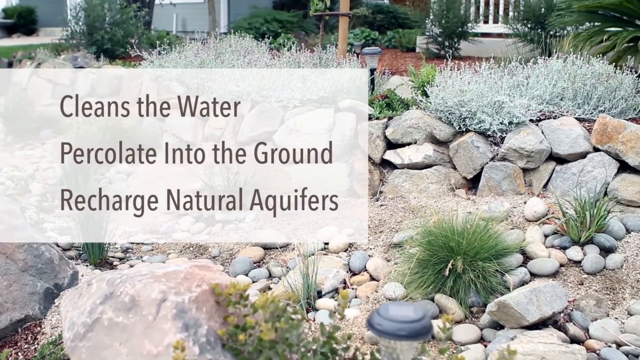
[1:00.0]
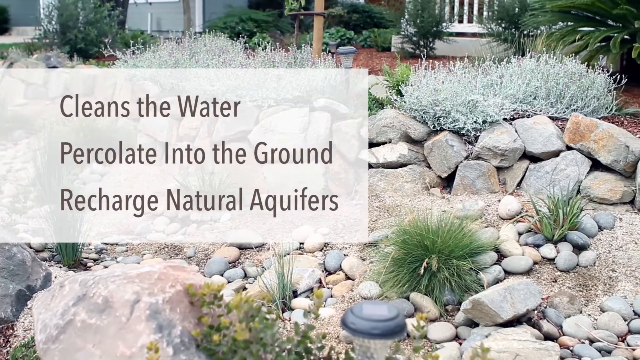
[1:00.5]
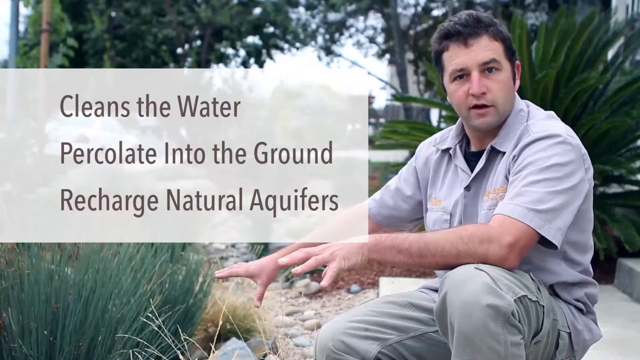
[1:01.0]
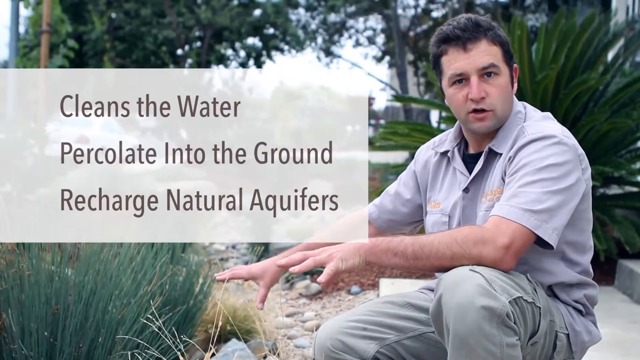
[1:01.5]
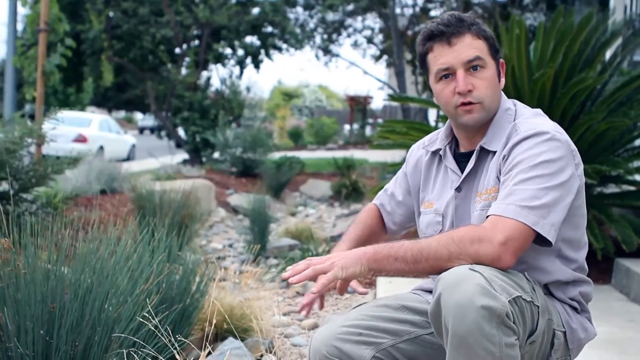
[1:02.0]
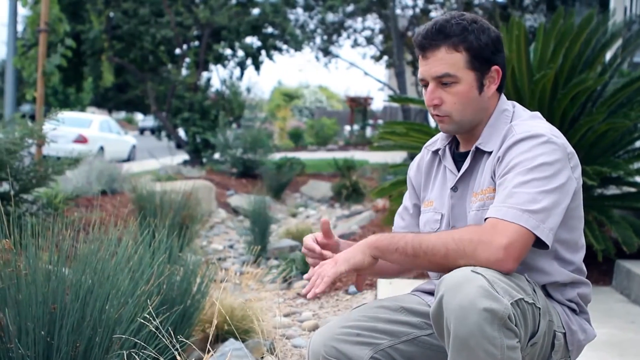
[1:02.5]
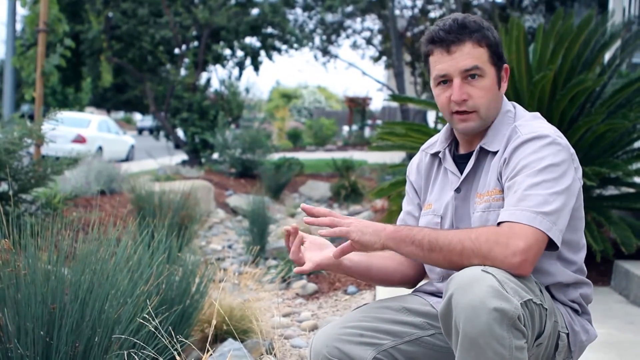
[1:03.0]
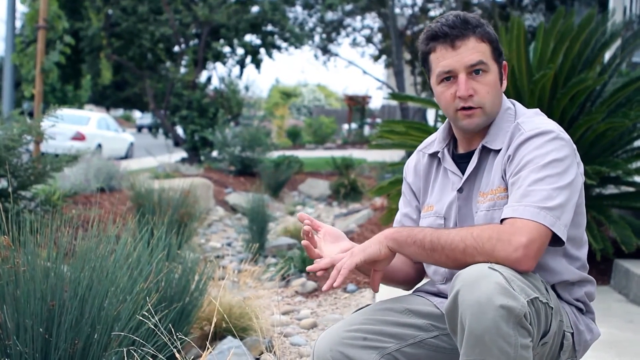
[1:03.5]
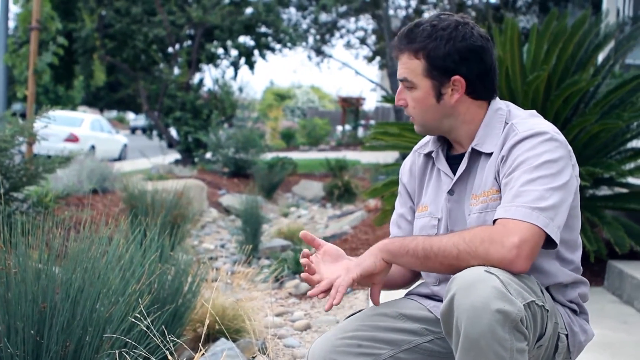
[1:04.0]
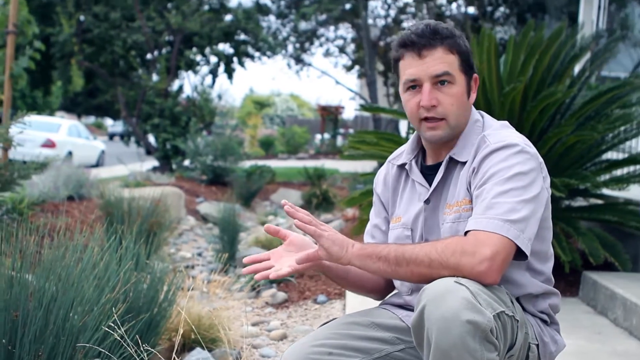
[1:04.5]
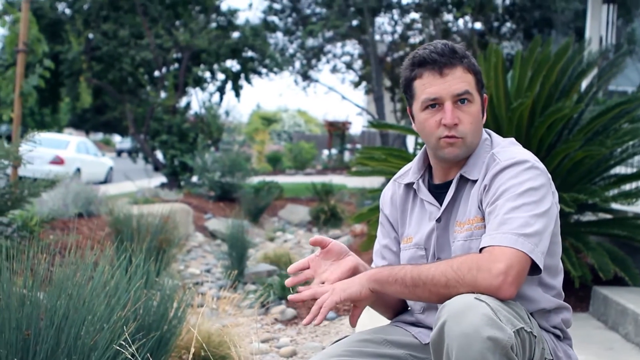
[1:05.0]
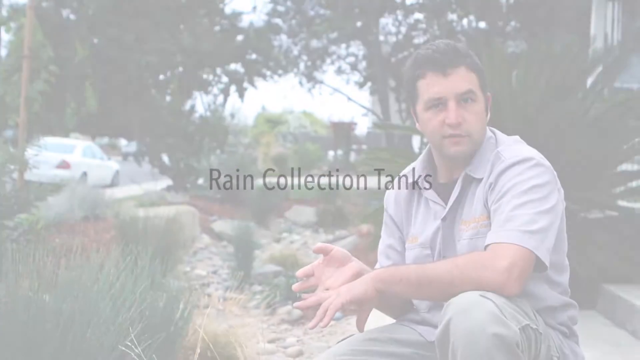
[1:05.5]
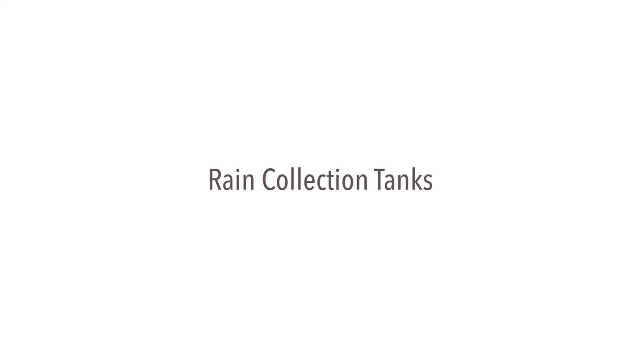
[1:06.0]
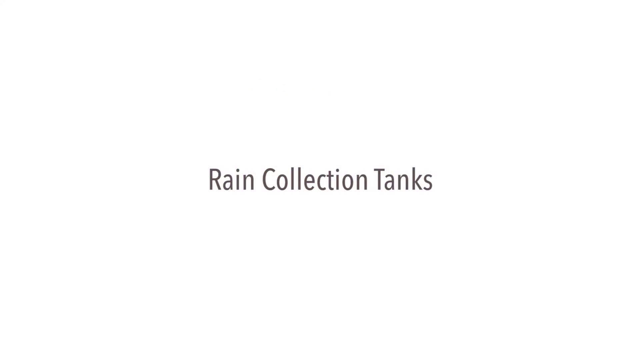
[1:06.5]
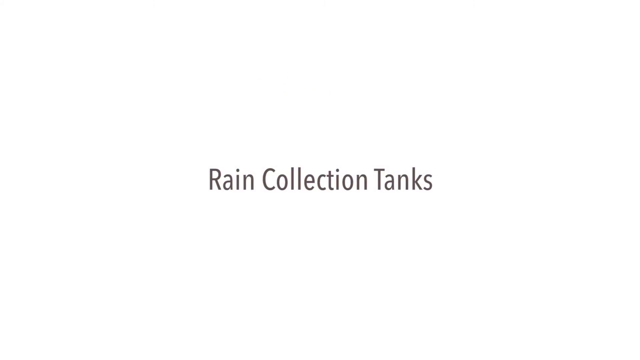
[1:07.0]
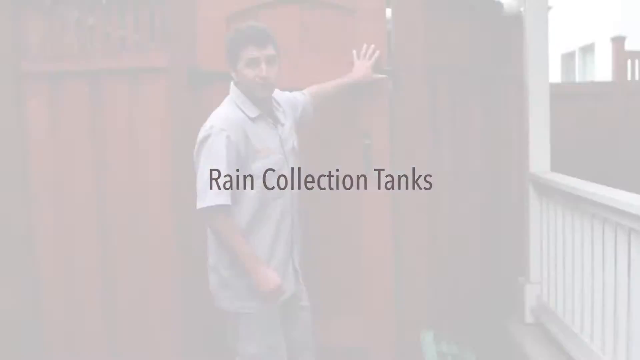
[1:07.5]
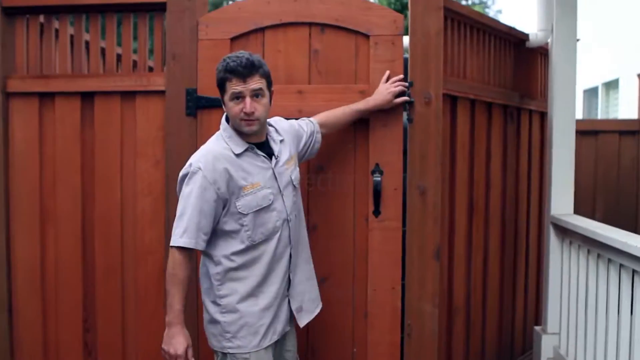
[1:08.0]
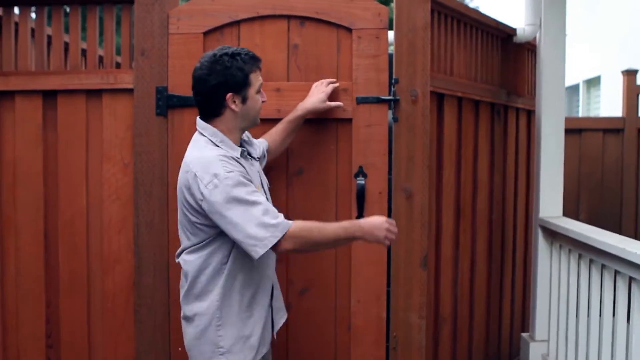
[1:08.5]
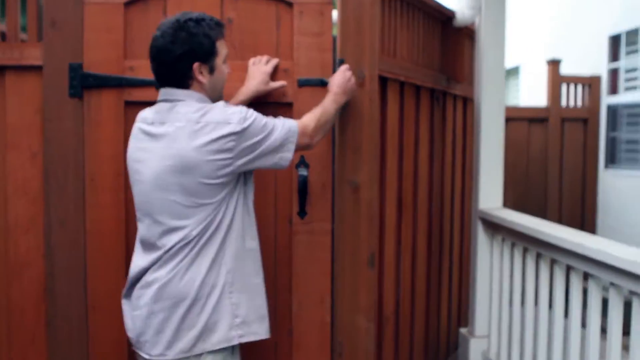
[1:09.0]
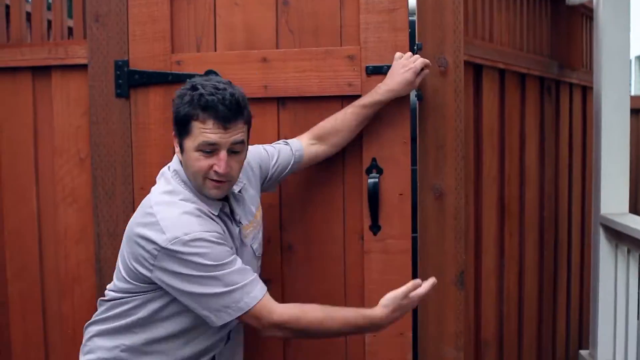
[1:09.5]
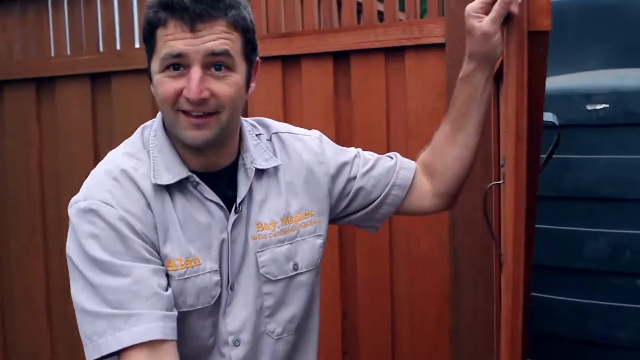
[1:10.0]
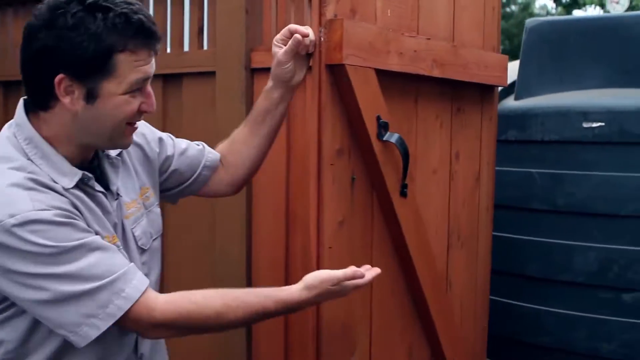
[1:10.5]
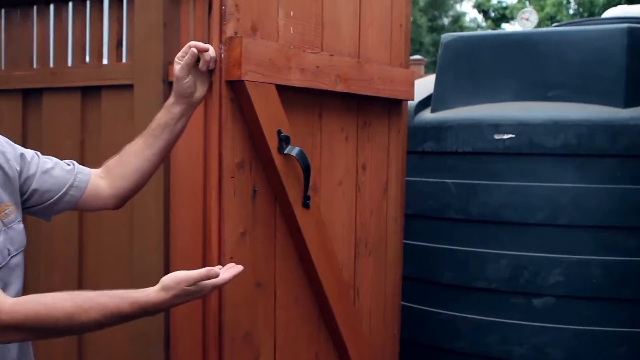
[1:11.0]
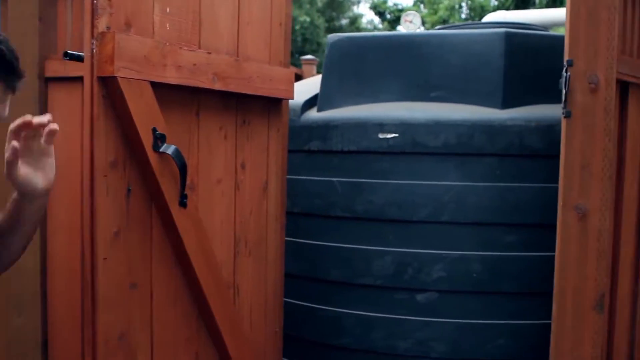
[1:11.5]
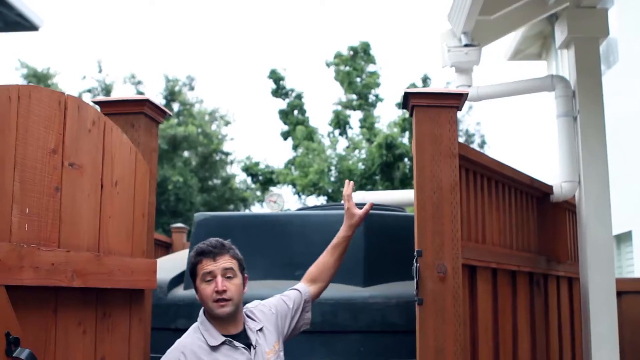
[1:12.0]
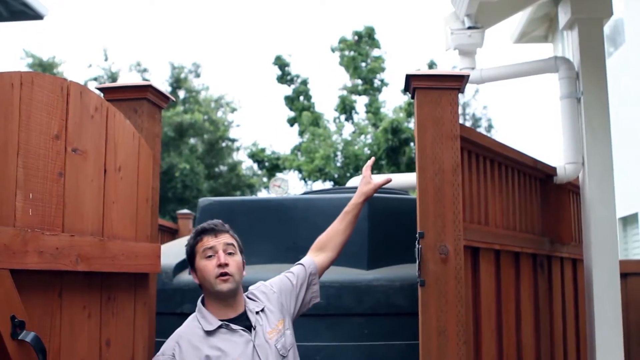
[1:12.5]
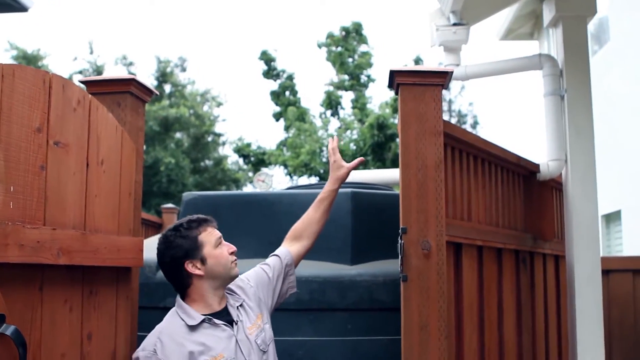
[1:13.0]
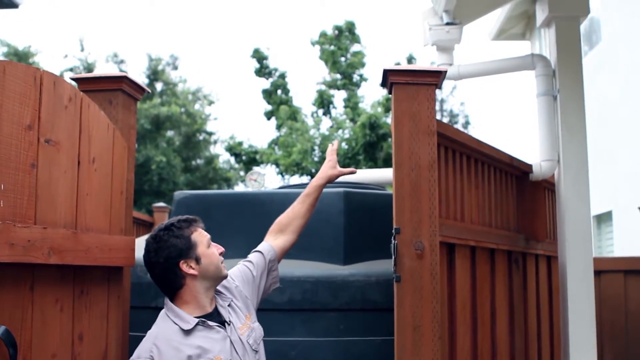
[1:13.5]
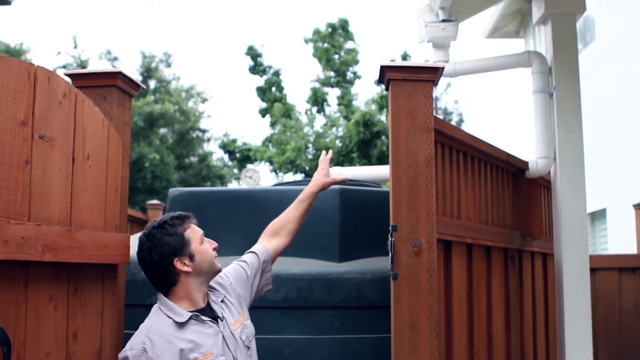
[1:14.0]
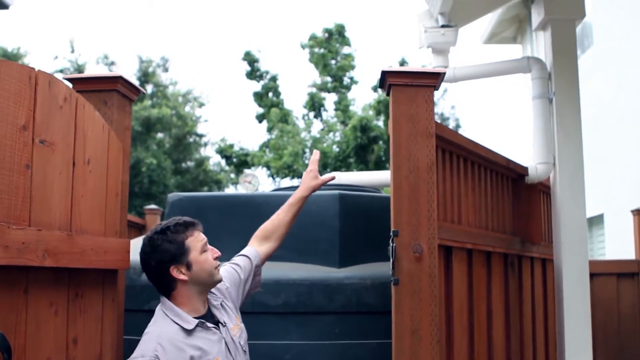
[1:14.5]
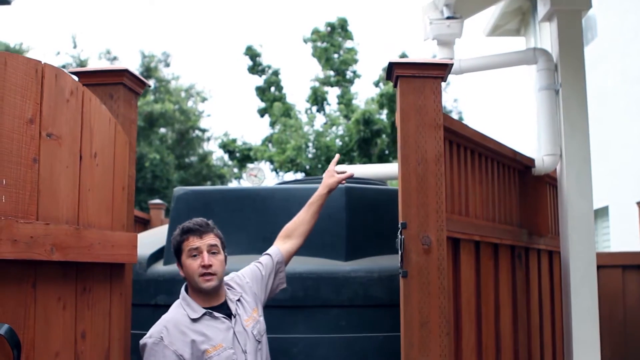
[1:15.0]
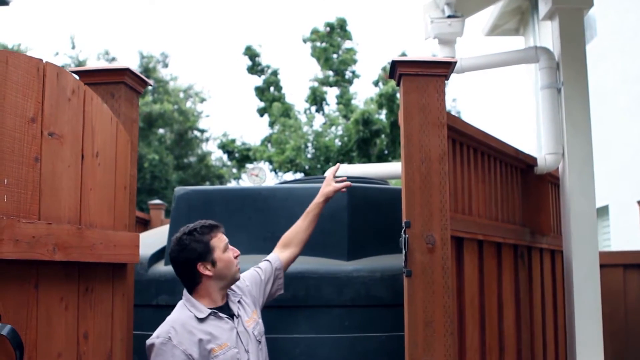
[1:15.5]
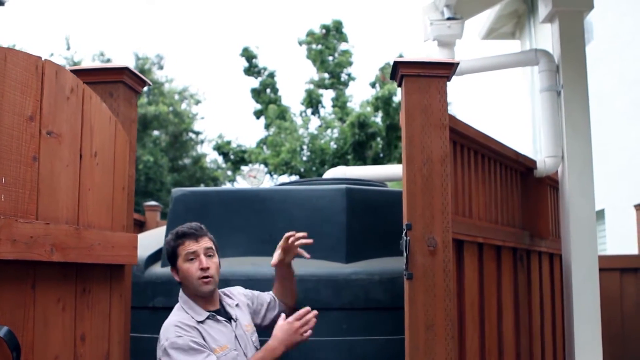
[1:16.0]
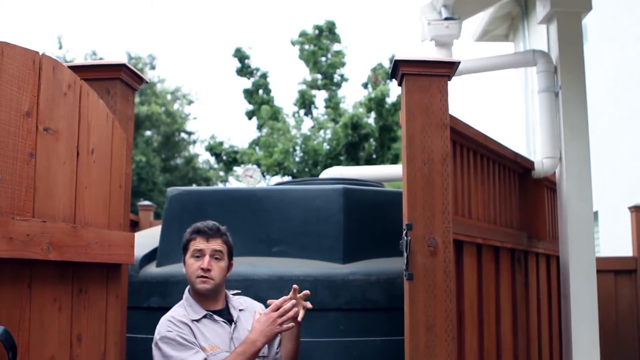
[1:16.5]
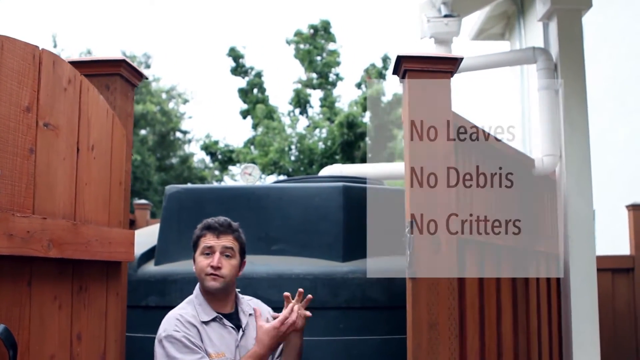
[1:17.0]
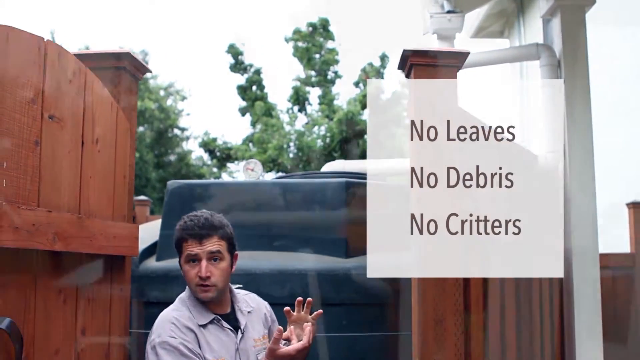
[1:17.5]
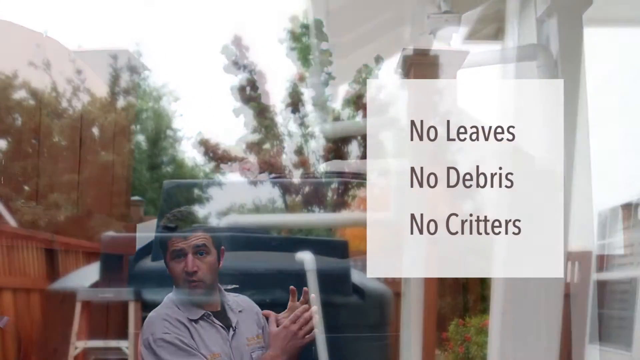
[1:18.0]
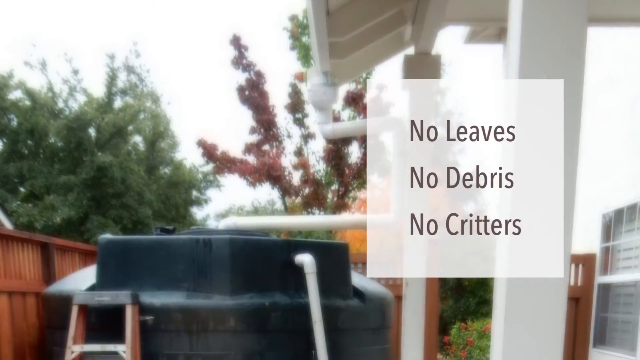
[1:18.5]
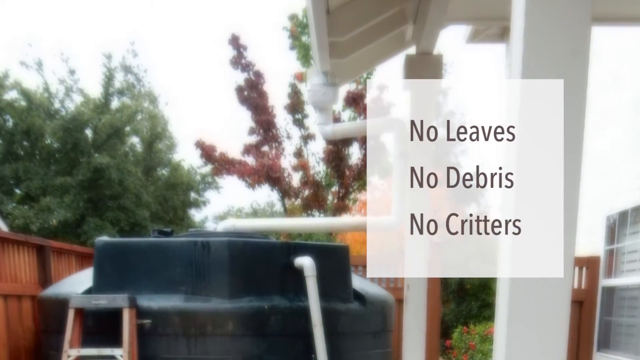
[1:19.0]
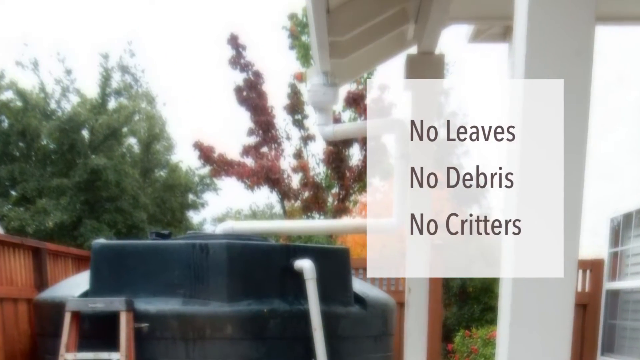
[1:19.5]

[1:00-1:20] Alan, in his early 30s, wears a grey shirt with a black t-shirt underneath and khaki cargo pants with pockets on either side around the knees. On-screen text includes "cleans water" and "recharges natural aquifers." The scene changes, and he introduces a very big dark green tank, opening it with excitement. The benefits of the rain collection tanks are listed as "no leaves, no debris, no critters." The tank is housed in a brown wooden storage place, and a pipe comes from the rooftop into the tank. The words "For more information, visit www.fema.gov" appear.